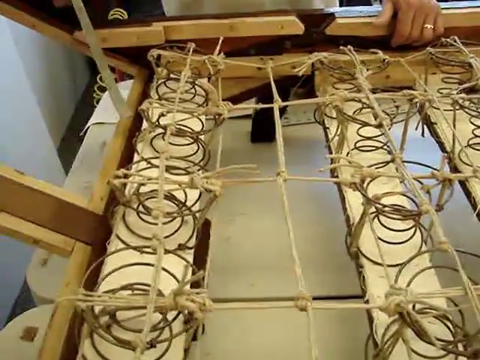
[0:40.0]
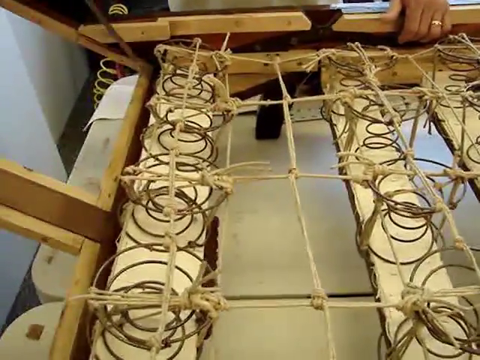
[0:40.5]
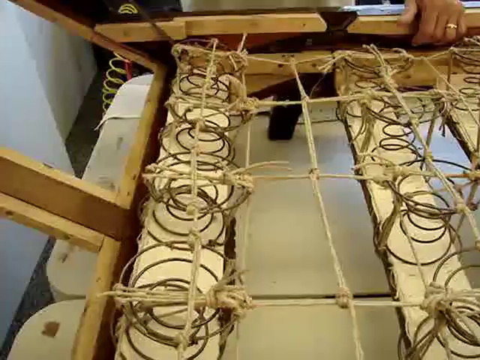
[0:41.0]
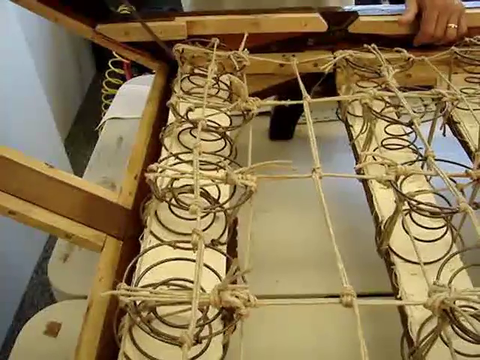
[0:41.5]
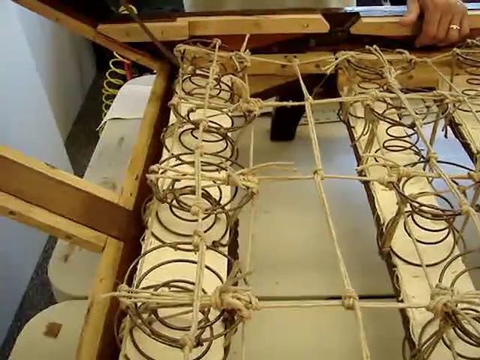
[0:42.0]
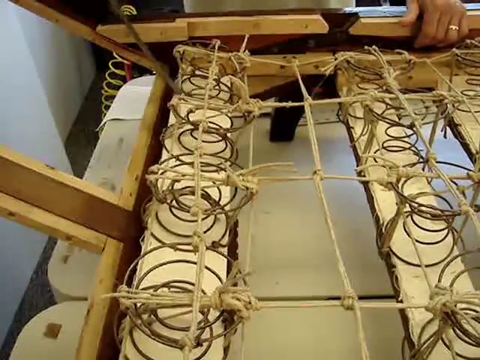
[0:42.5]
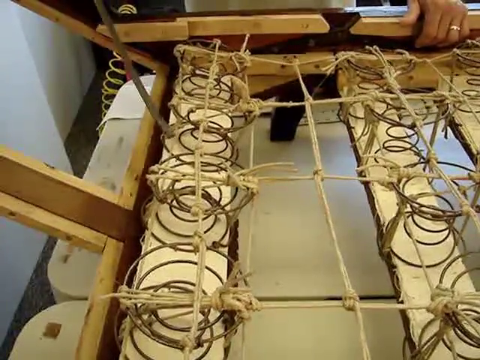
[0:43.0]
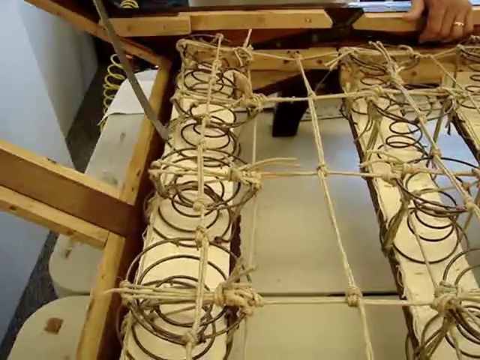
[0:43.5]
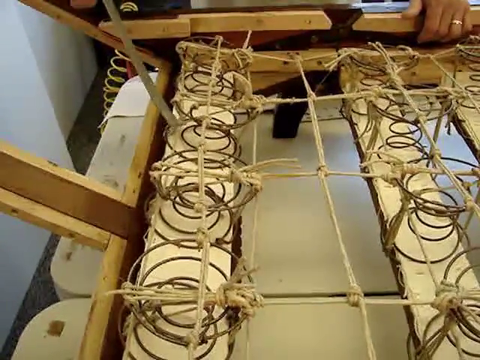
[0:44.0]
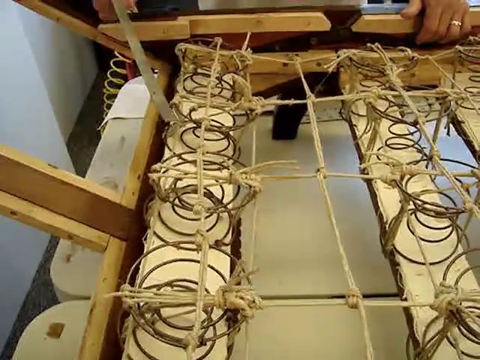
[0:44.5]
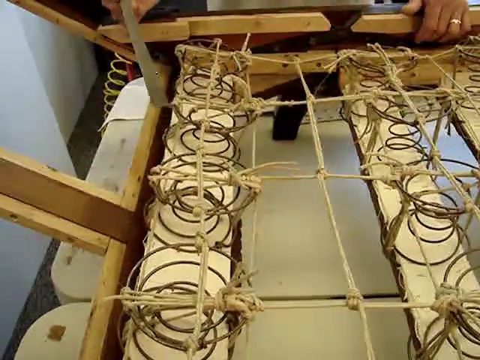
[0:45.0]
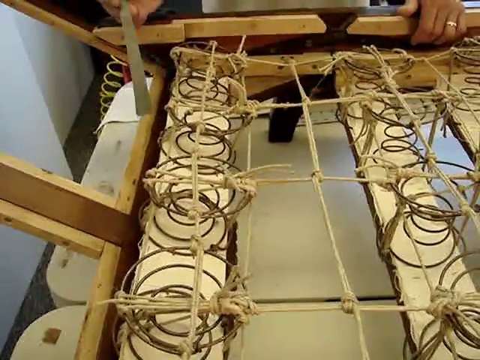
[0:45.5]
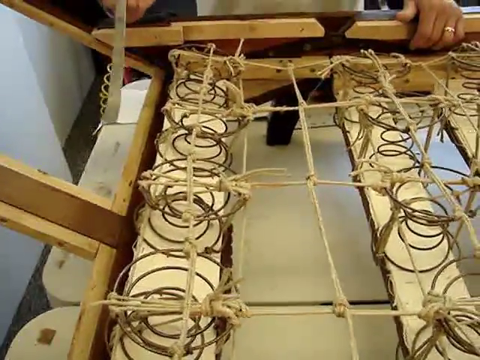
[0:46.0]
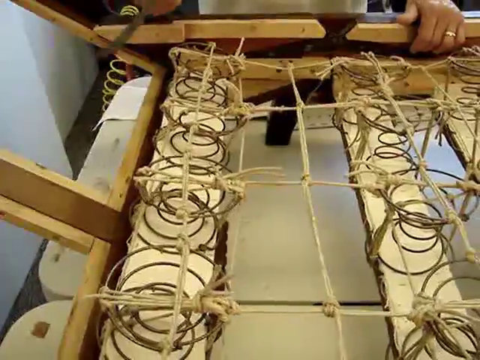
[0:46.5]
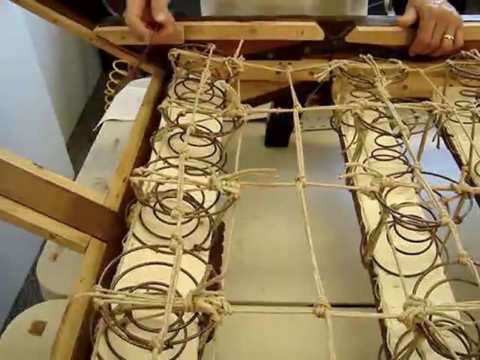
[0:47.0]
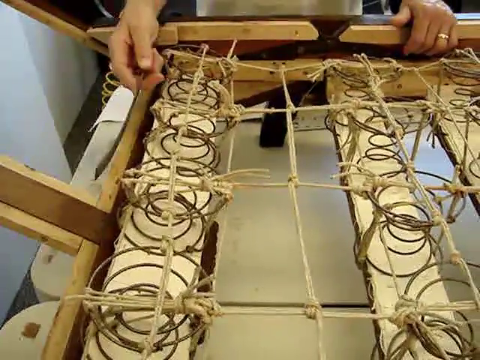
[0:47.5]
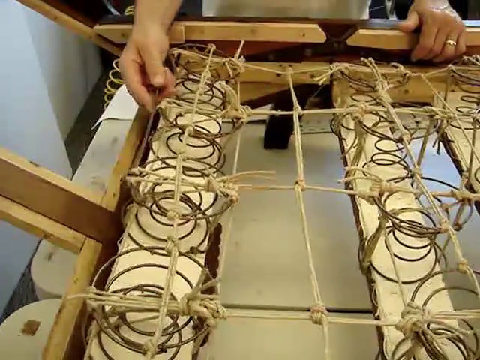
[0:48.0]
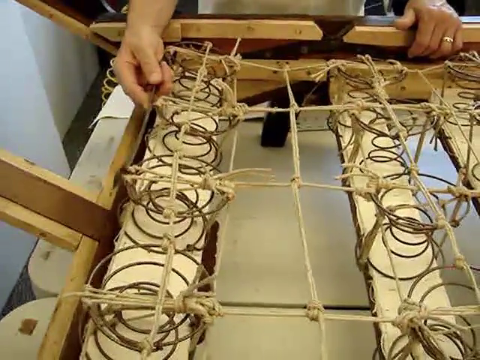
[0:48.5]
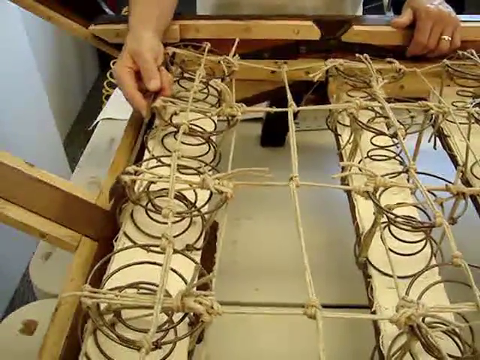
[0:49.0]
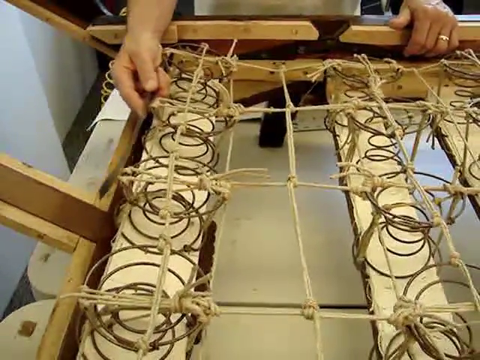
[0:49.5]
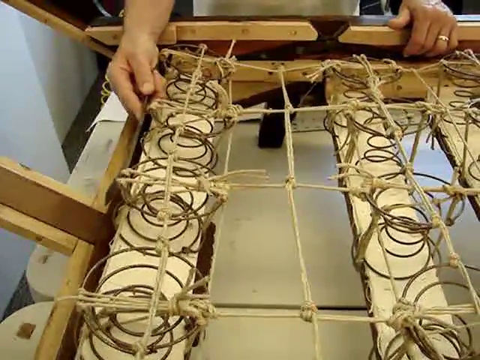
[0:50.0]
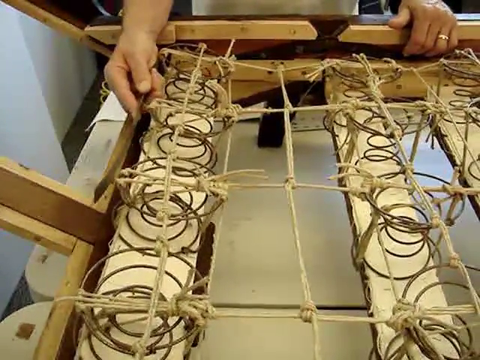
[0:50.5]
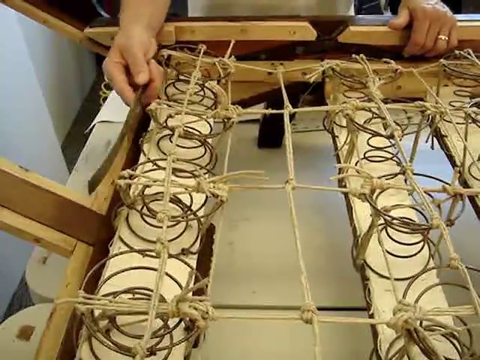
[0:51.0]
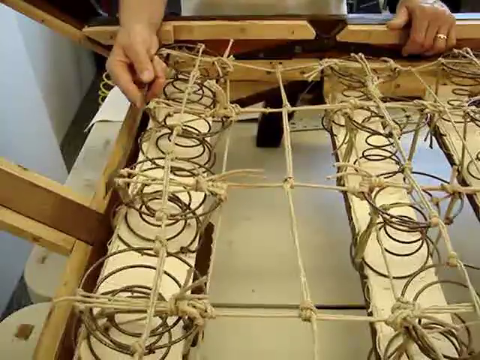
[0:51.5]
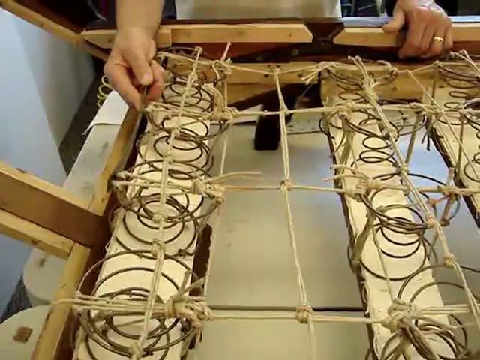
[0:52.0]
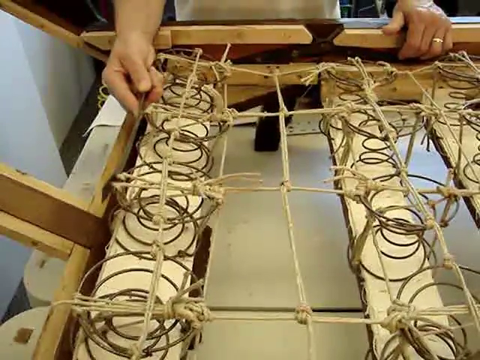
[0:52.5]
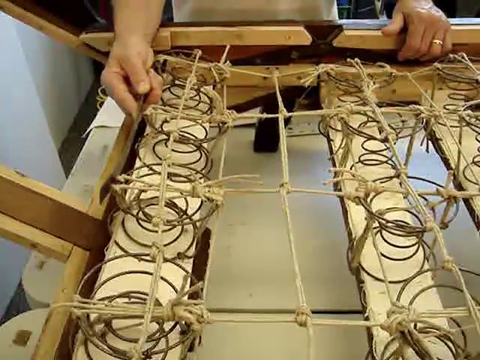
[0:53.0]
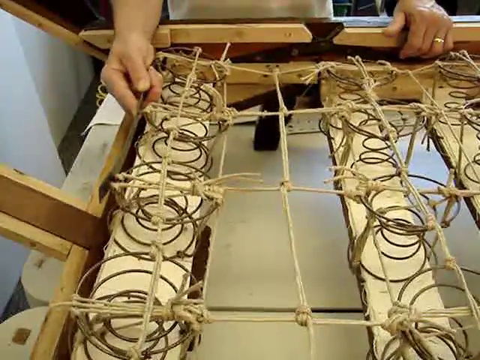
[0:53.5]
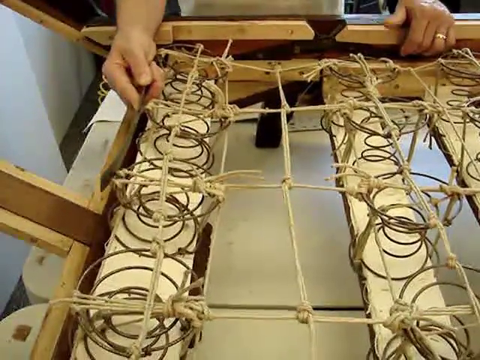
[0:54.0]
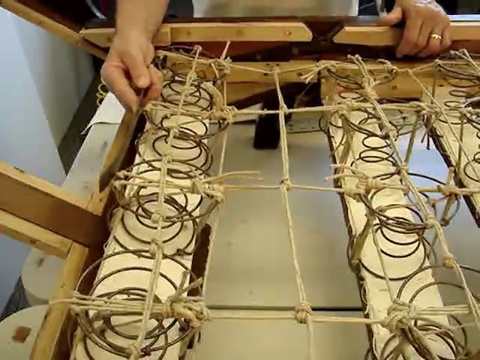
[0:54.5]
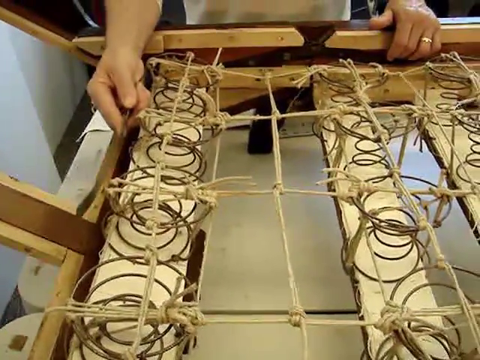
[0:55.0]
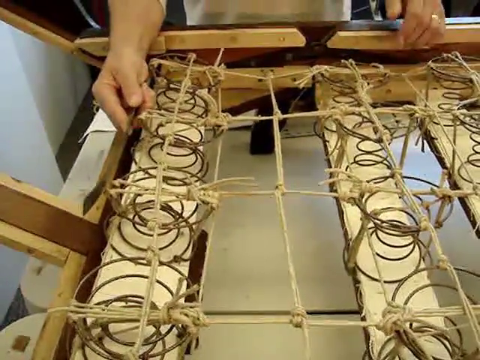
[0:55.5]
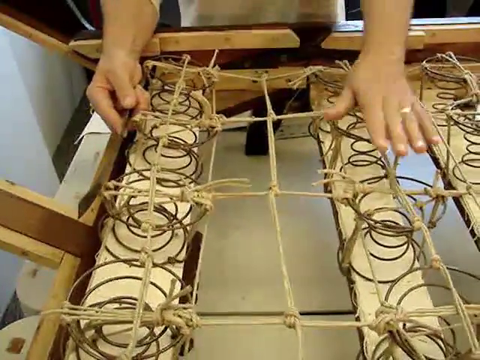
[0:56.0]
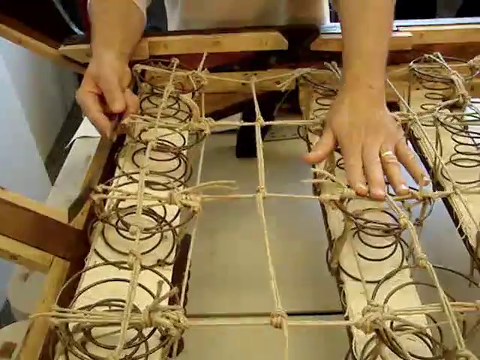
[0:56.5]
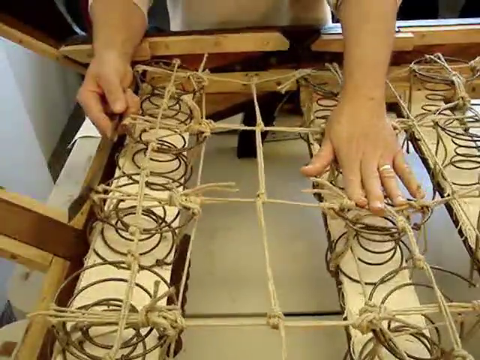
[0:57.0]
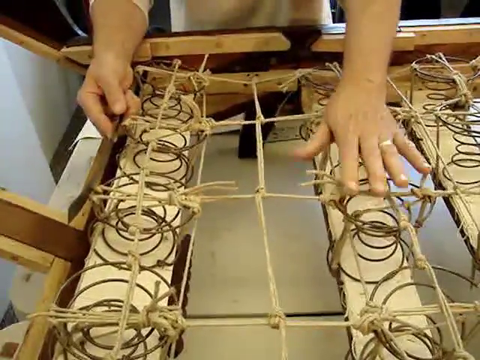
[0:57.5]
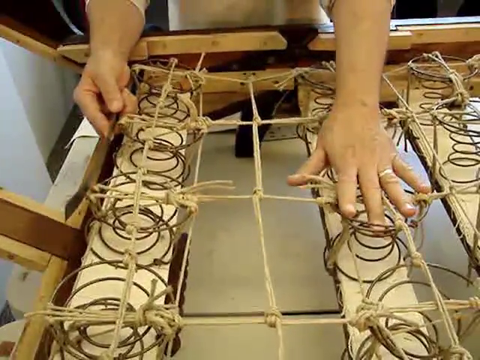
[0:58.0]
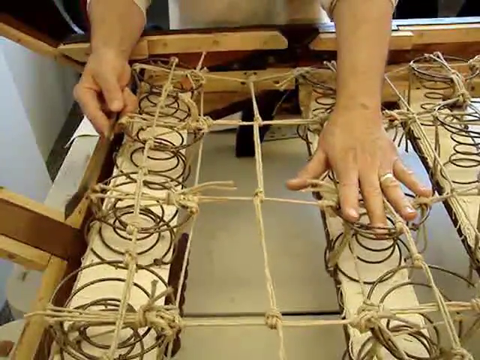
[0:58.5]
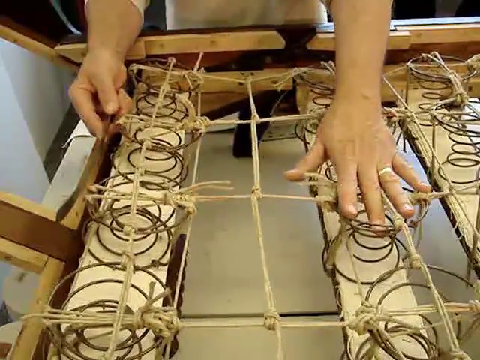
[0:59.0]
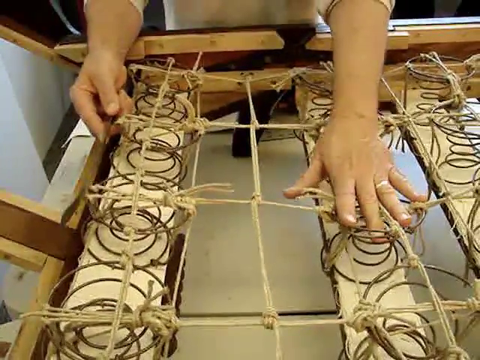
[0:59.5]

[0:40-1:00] The man points at the springs along the sides and touches them to show how tight they are. He holds on top of them, showing how strongly the springs are attached to the wood. The structure is made of wood laid down, with springs on top of it and something tied on top of the springs, in his workshop.